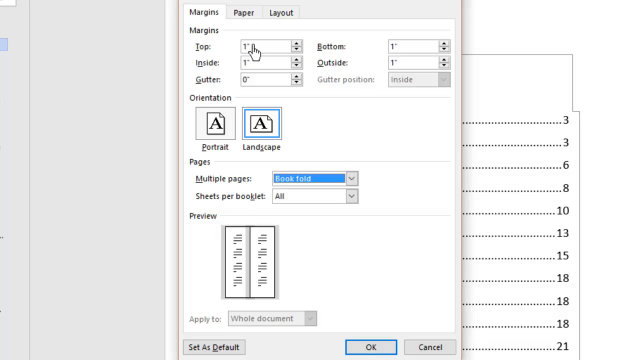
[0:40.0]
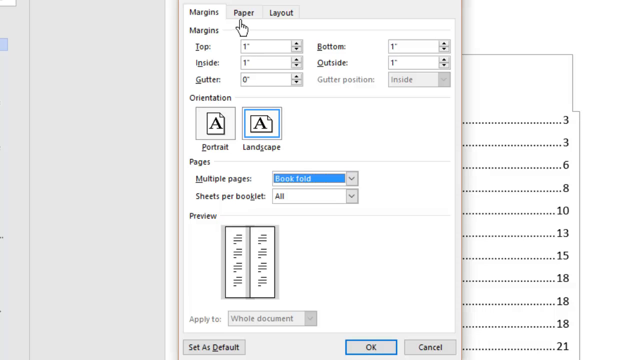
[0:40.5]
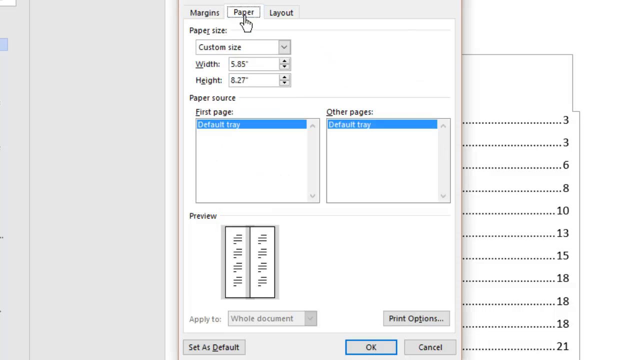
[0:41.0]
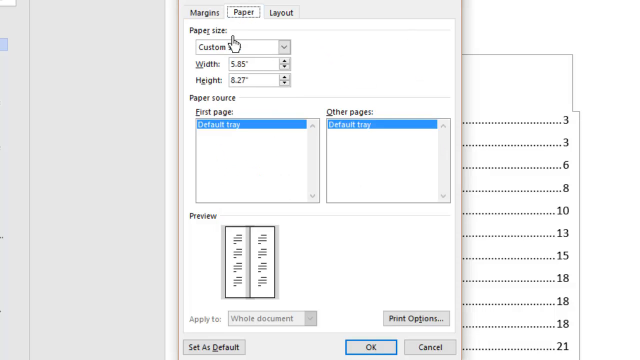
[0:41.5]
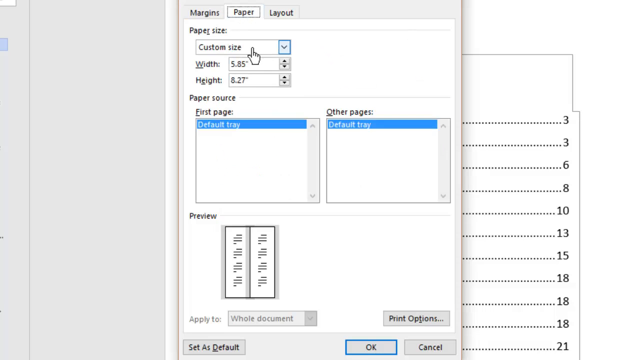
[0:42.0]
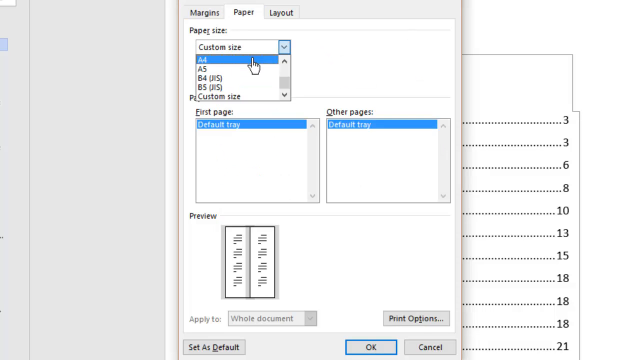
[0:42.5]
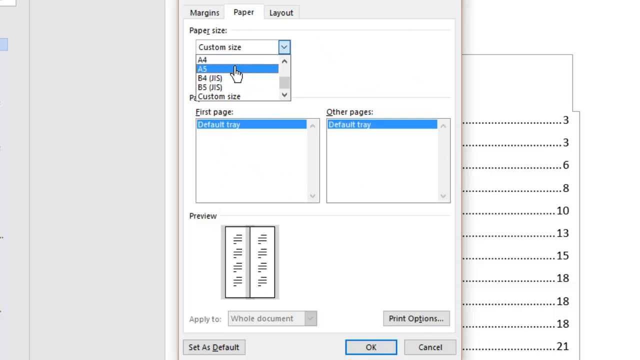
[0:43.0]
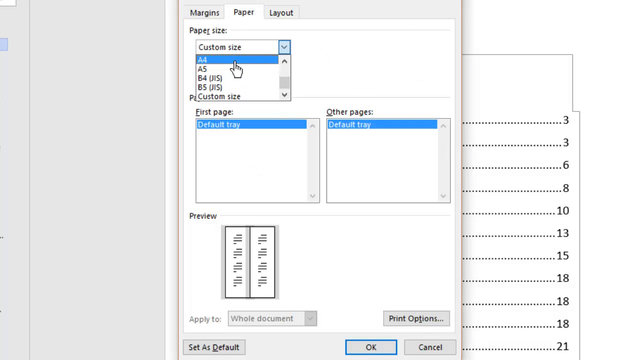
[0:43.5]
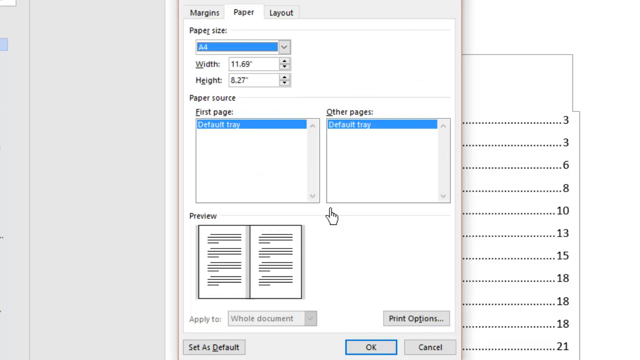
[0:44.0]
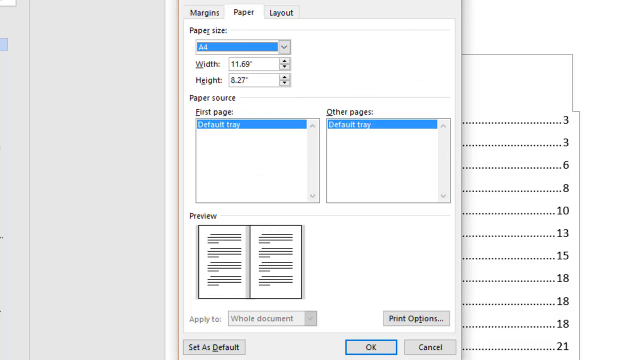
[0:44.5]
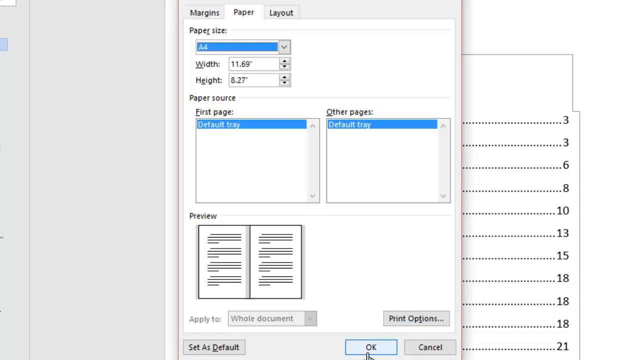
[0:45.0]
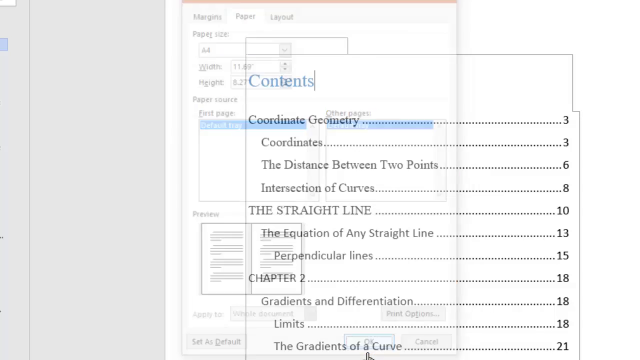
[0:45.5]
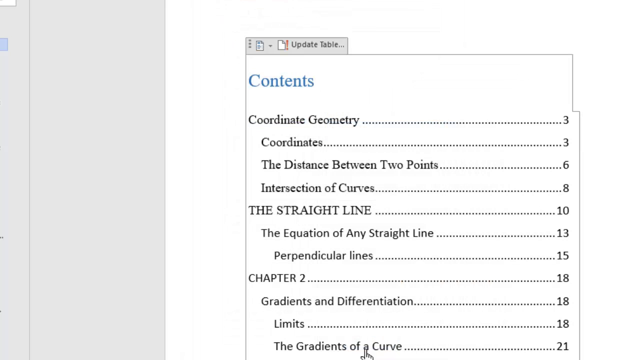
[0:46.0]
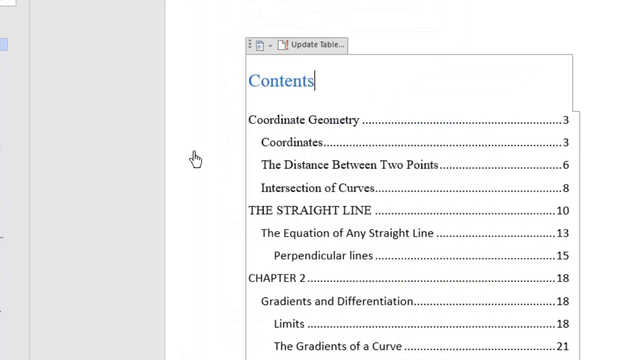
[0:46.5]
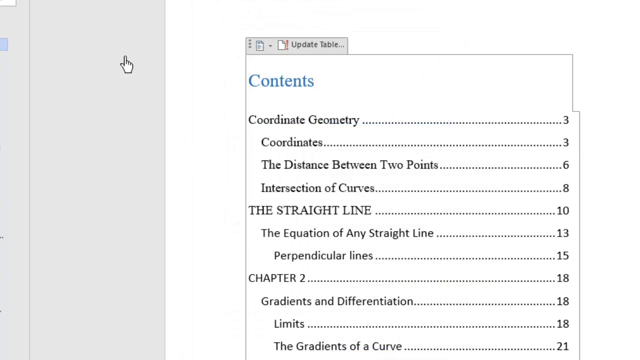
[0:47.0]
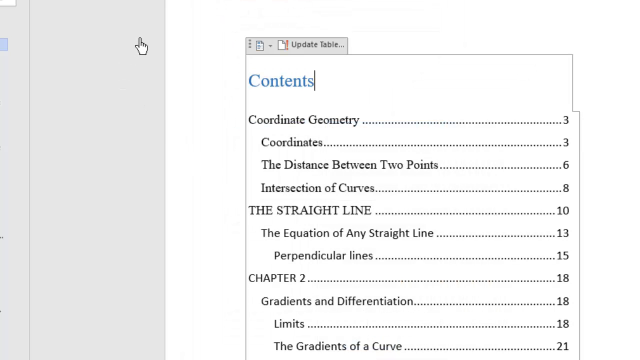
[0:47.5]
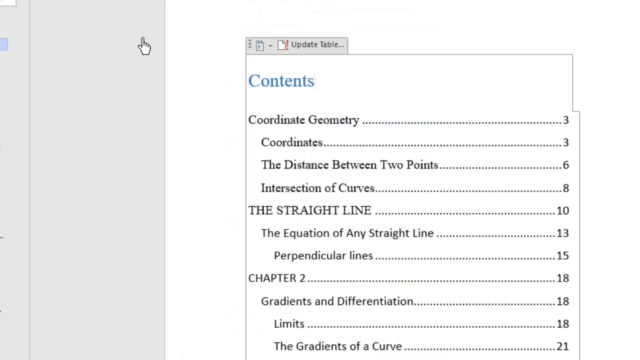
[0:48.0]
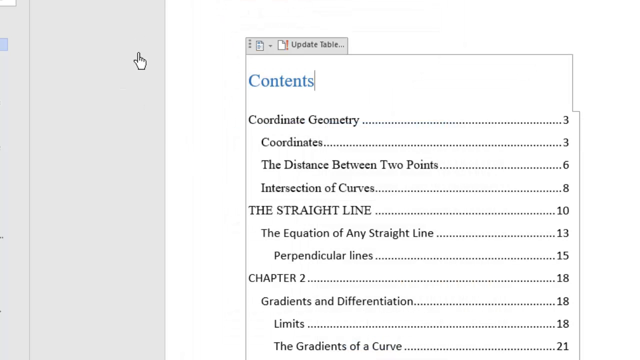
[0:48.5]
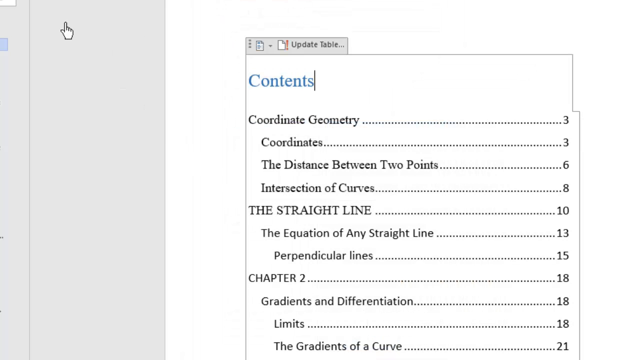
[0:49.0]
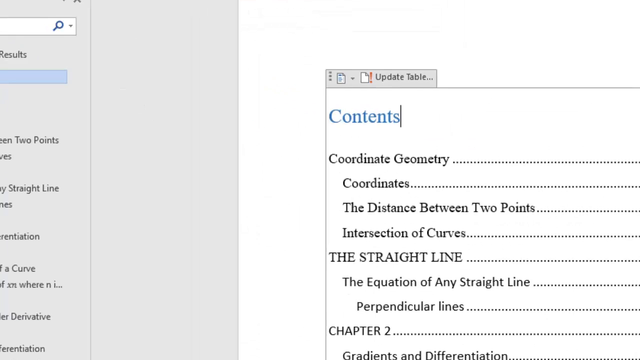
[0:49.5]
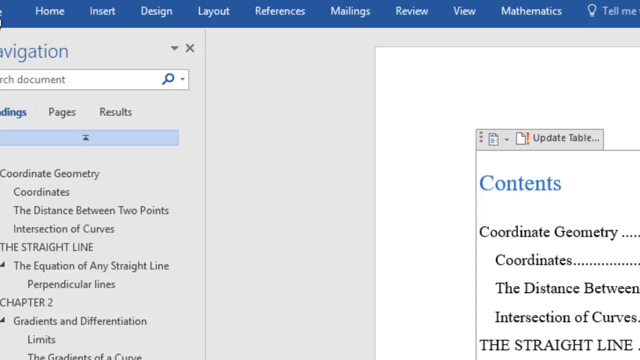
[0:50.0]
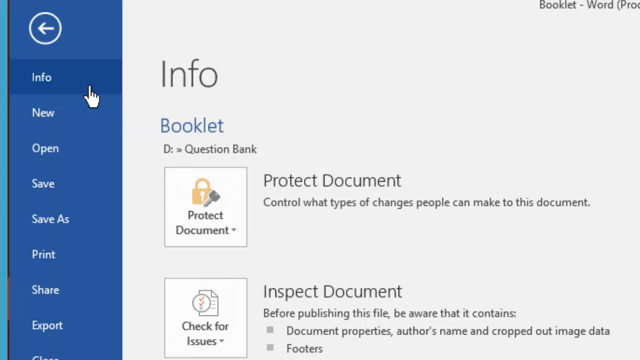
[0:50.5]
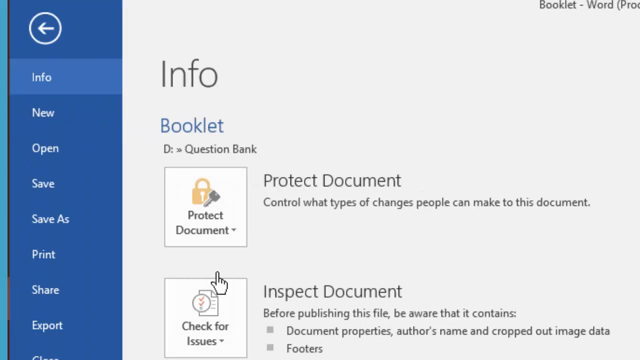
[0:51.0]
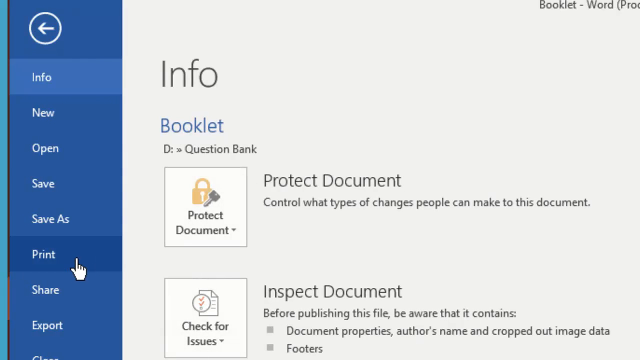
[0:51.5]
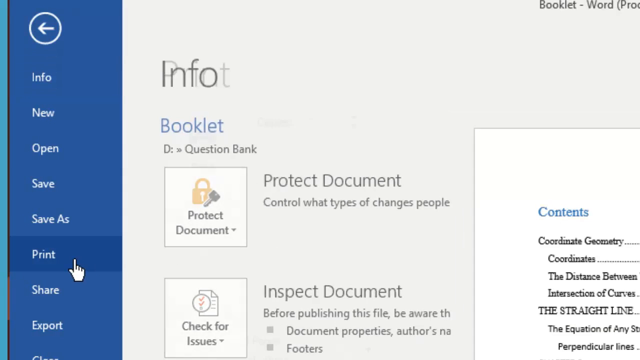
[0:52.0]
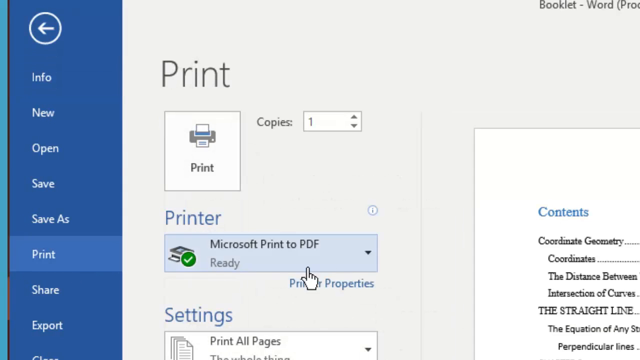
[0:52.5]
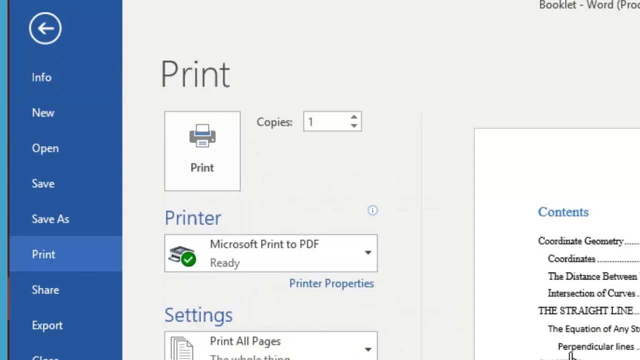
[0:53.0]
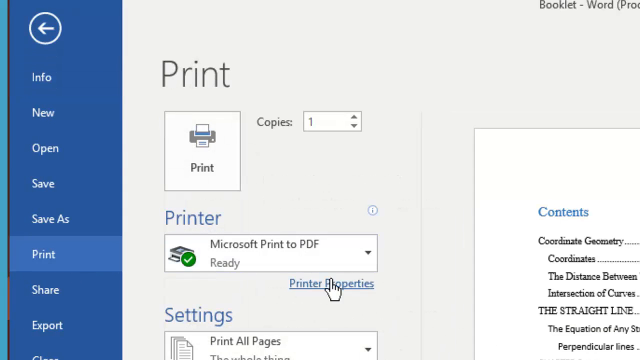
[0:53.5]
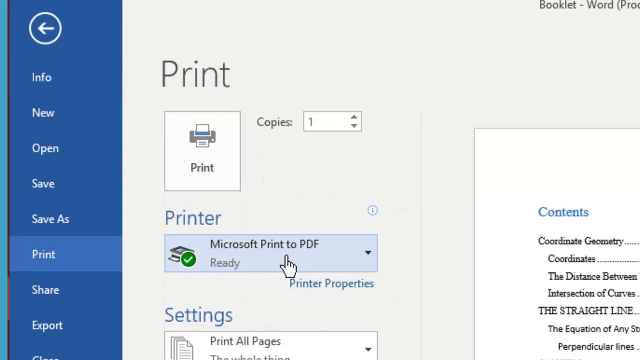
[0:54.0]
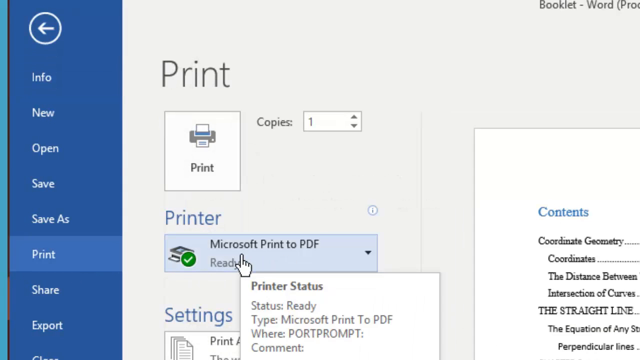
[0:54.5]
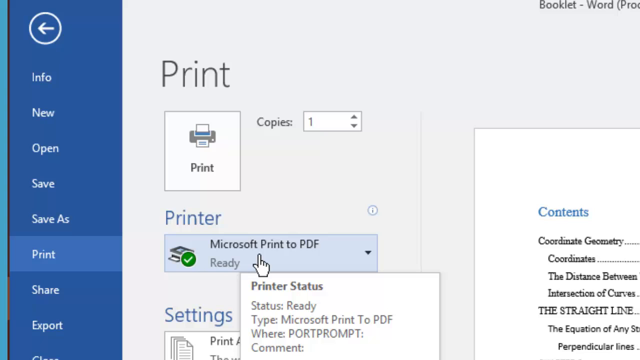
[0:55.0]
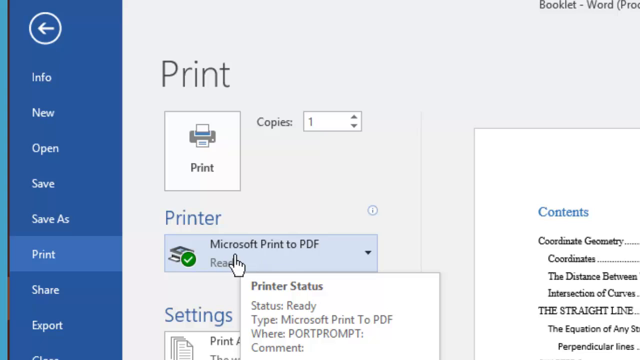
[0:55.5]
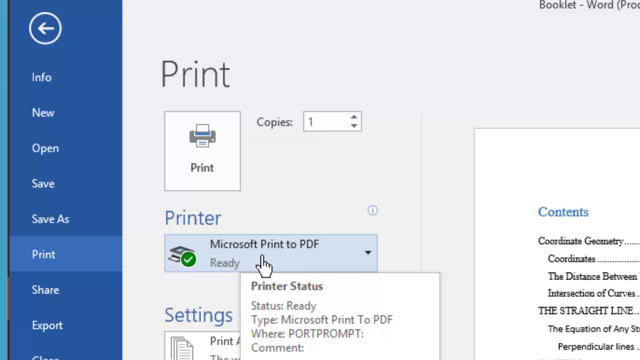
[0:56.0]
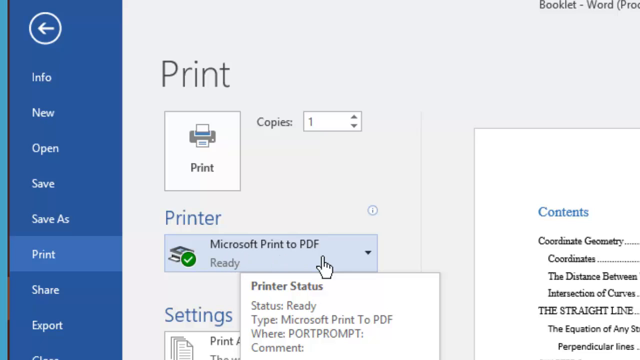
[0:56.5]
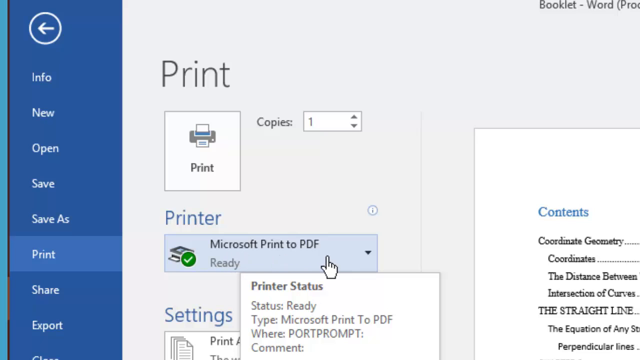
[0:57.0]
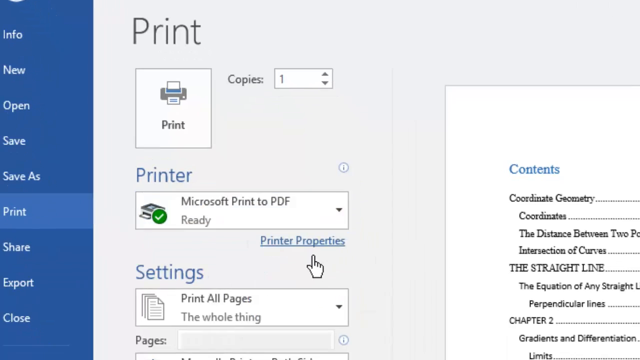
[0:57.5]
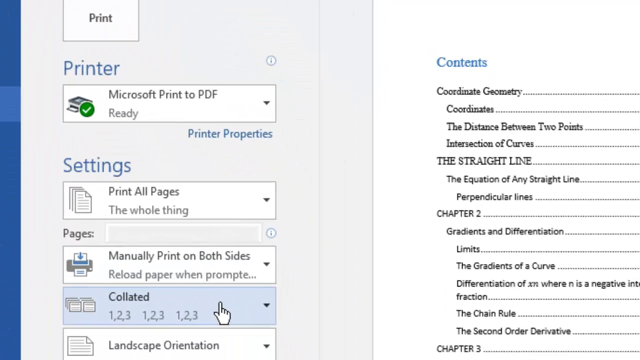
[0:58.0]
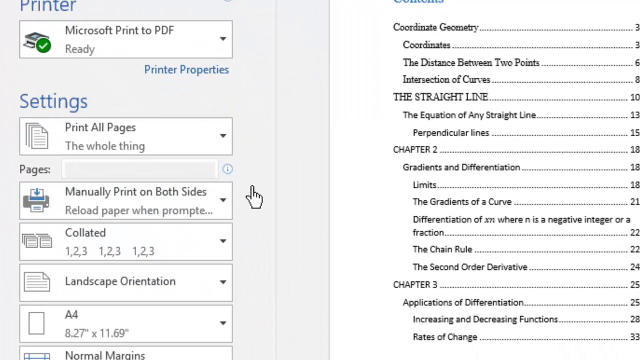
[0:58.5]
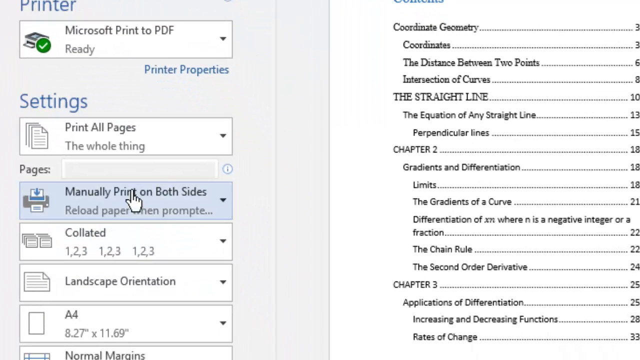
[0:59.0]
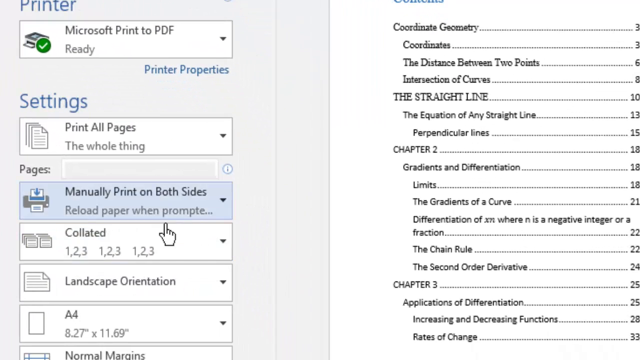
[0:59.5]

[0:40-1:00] In Microsoft Word, a pop-up box is open with the margins tab selected. The mouse moves toward the top and clicks the paper tab next to the margins tab. From there it goes to the paper size drop-down menu, choosing A5 and then A4; A4 is lit up blue. A click off to the right makes the box disappear, returning to the main Microsoft Word page. The mouse moves to the left side of the page and clicks the print button. After moving left and right a few times, it clicks the button for Microsoft Print to PDF, then goes down under settings and starts clicking.